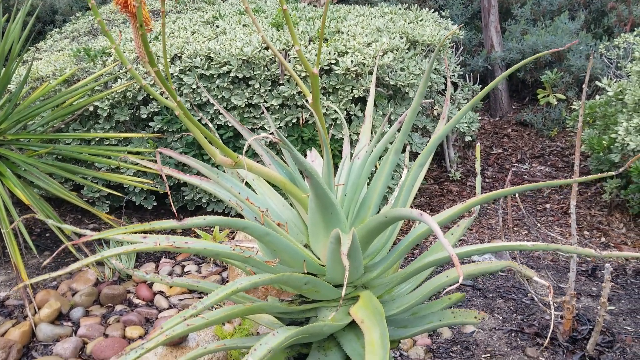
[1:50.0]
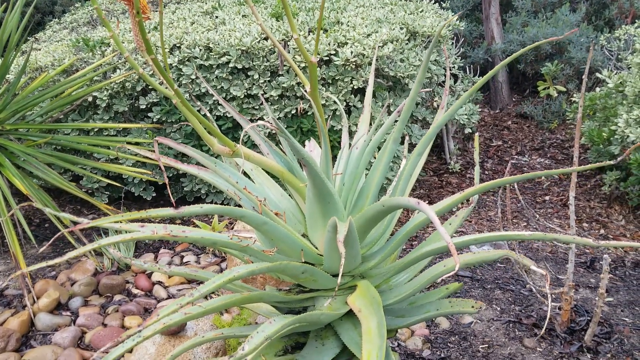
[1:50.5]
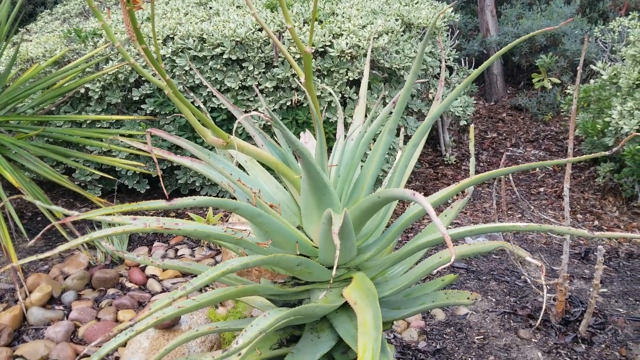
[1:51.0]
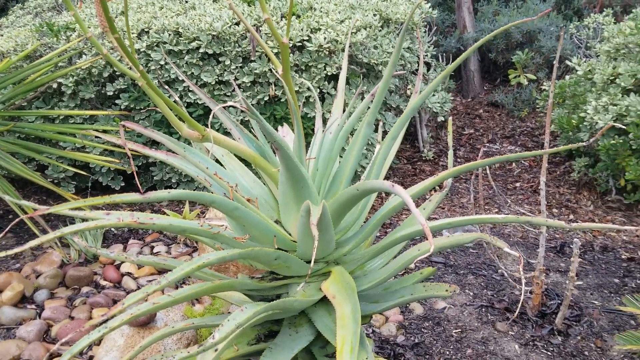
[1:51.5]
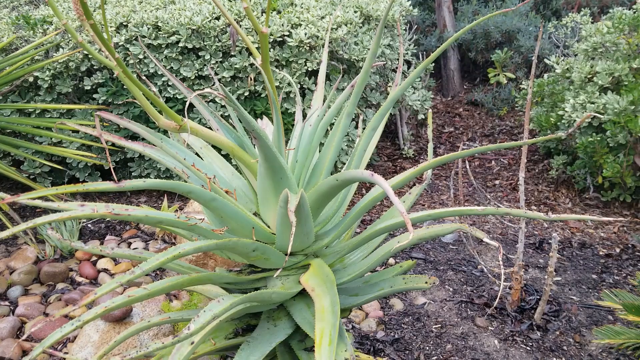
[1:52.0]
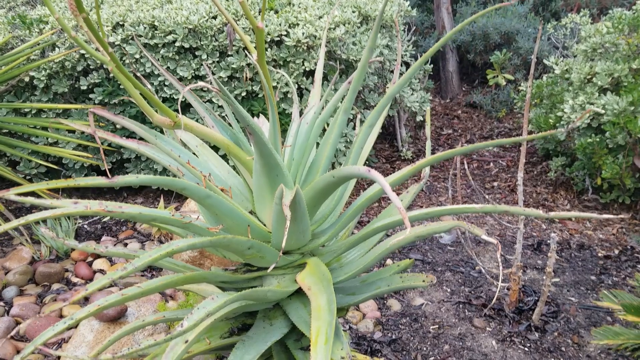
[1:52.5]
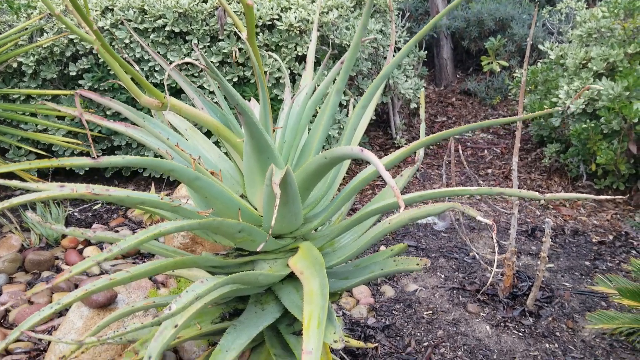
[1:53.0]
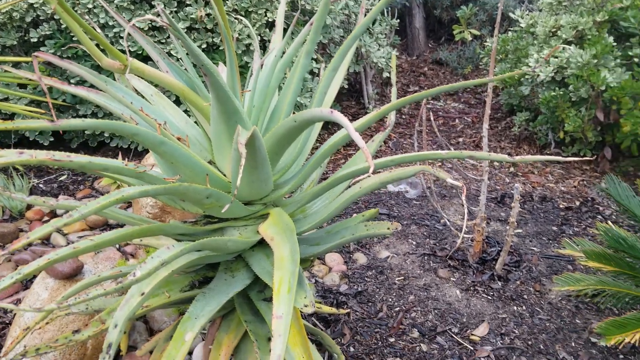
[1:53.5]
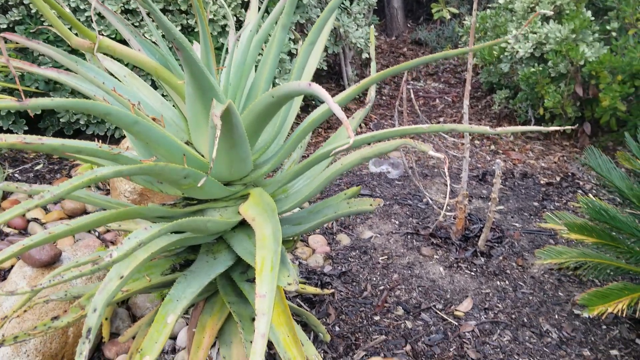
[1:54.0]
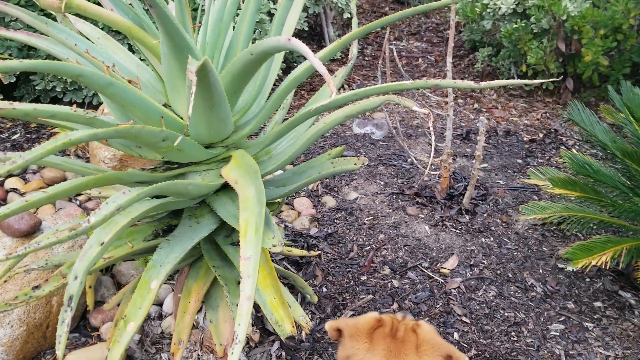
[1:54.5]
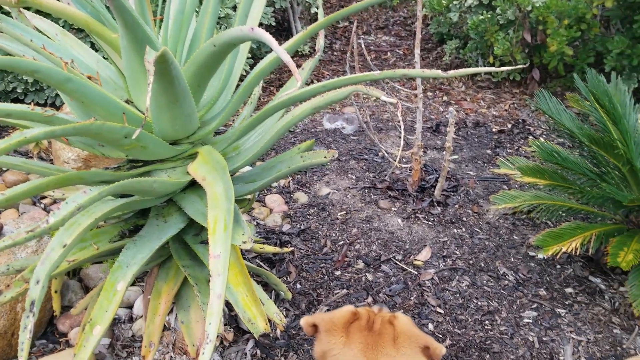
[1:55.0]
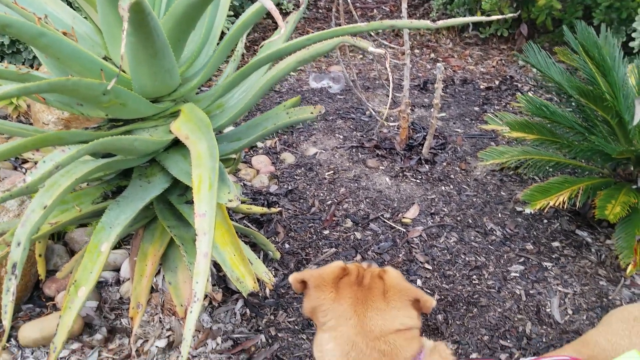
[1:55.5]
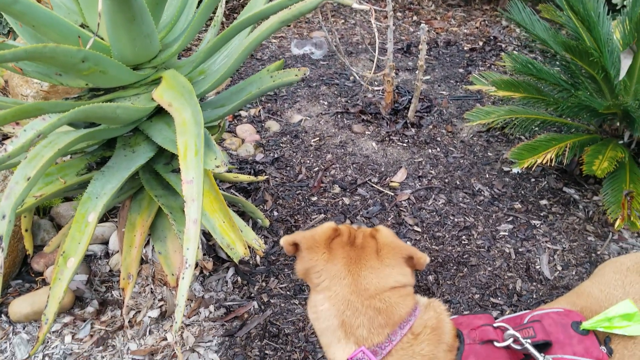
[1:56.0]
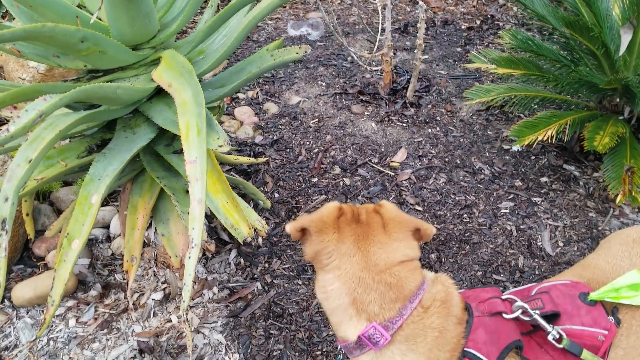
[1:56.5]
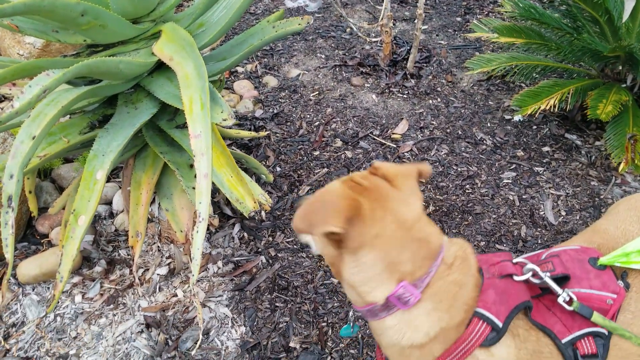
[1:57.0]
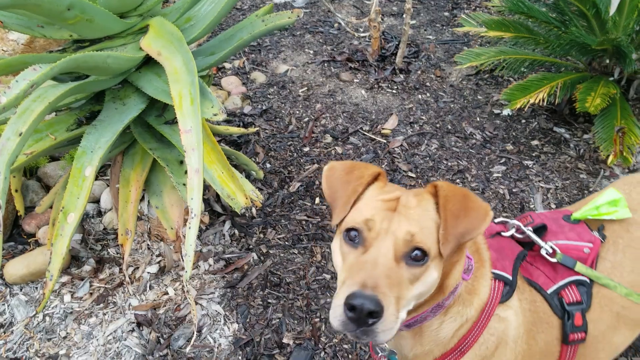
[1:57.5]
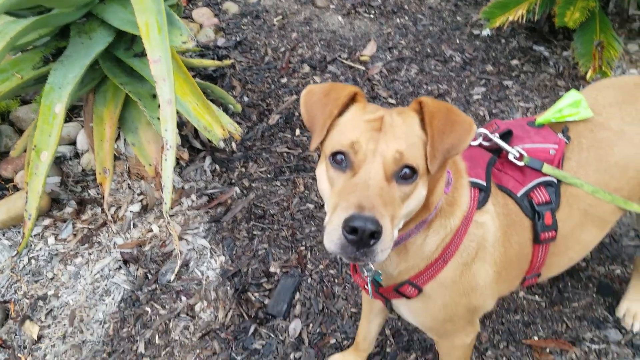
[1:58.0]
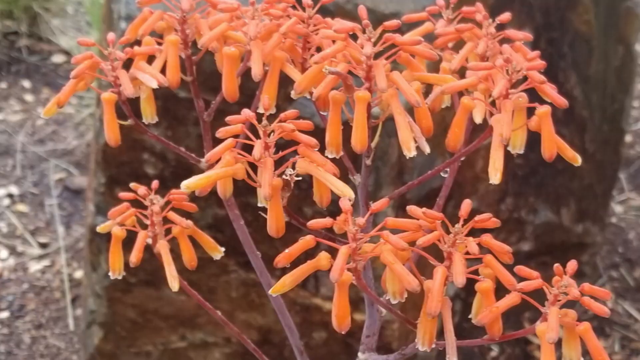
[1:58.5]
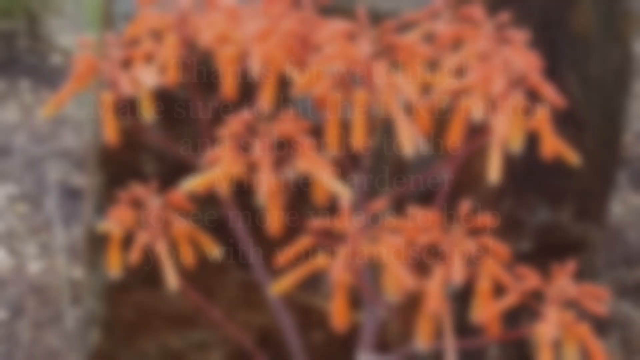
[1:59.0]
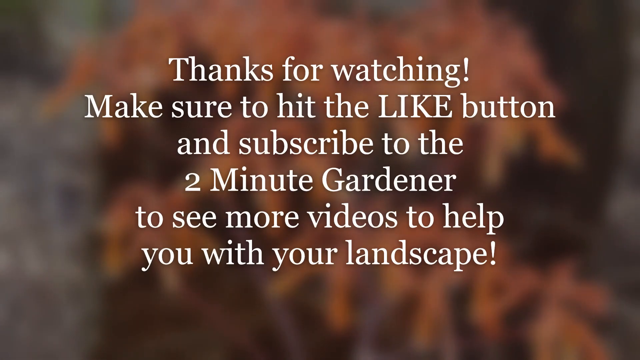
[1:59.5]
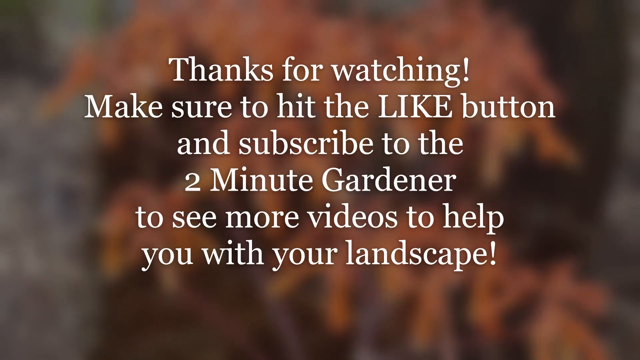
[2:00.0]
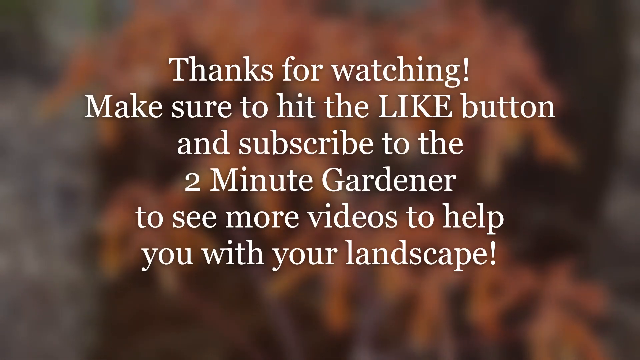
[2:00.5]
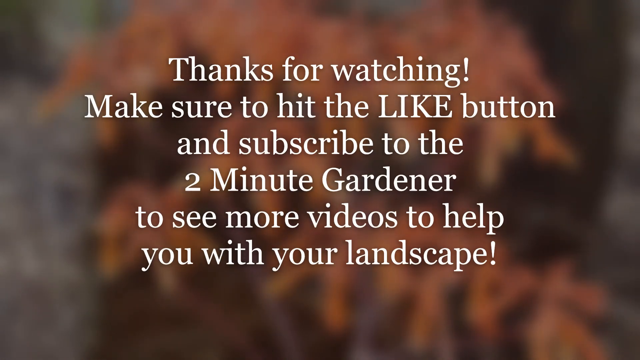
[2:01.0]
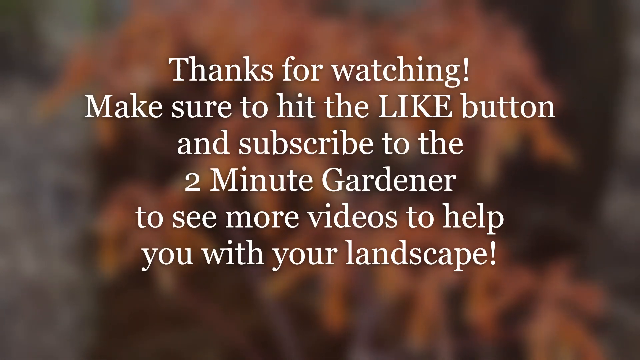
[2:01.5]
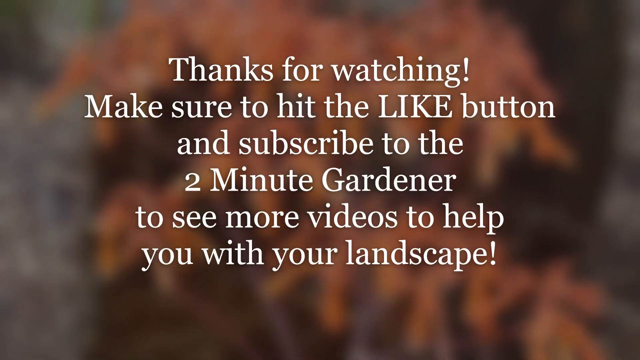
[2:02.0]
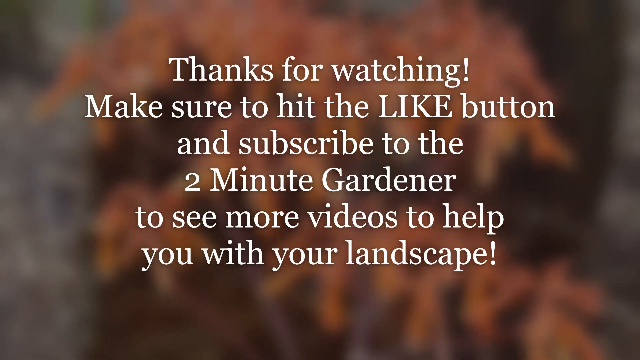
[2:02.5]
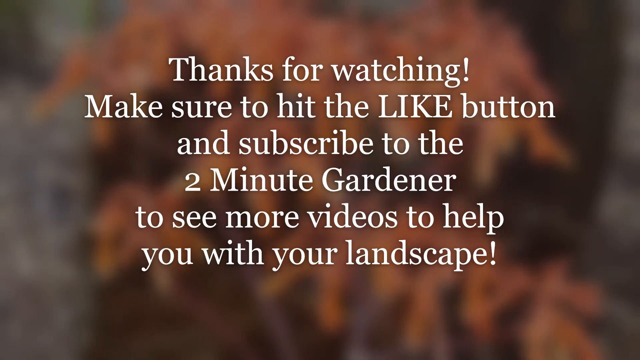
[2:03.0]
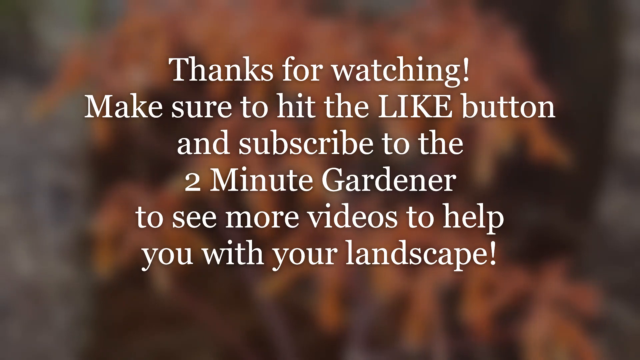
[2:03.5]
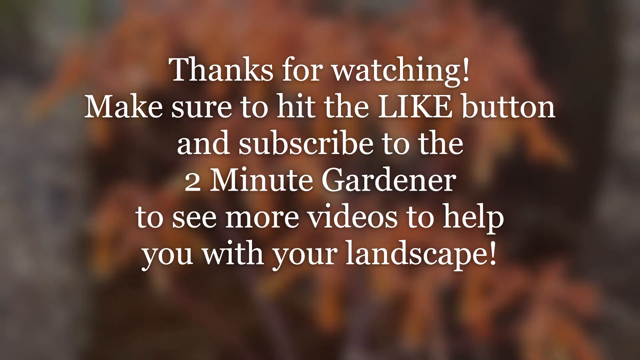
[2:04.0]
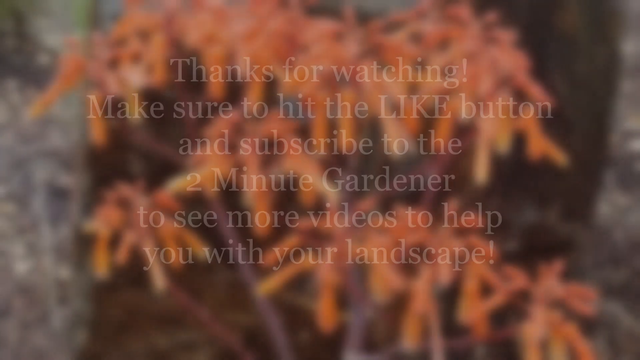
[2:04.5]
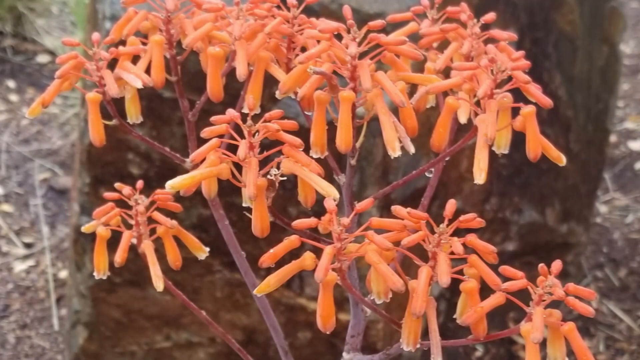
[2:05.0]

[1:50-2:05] Very large green aloe leaves fill the view, and the camera kind of tilts and pans down, left to right and top to bottom, revealing someone's dog. The video then cuts to a different image with an obscured plant in the background, and text comes onto the screen reading "thanks for watching make sure to hit the LIKE button and subscribe to the two-minute gardener to see more videos to help you with your landscape!", with "like" in all capital letters and an exclamation point at the end.